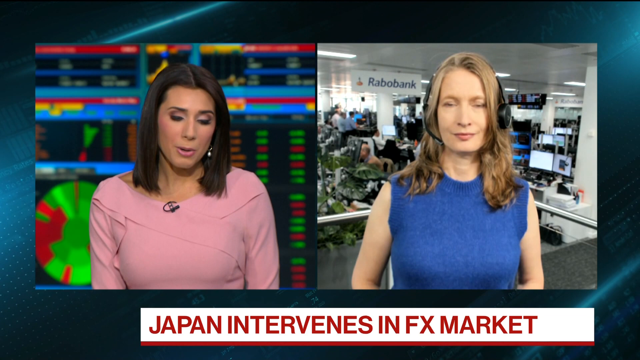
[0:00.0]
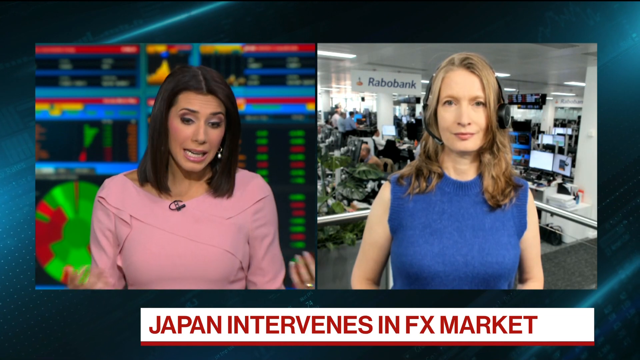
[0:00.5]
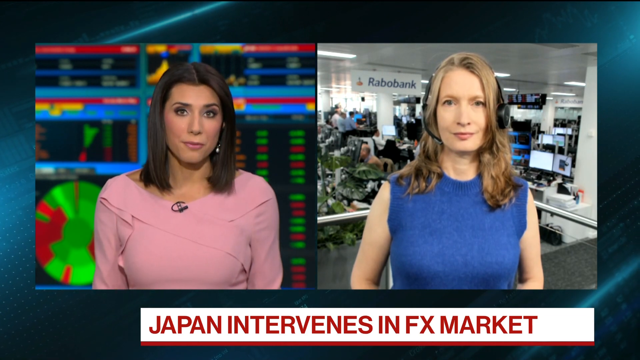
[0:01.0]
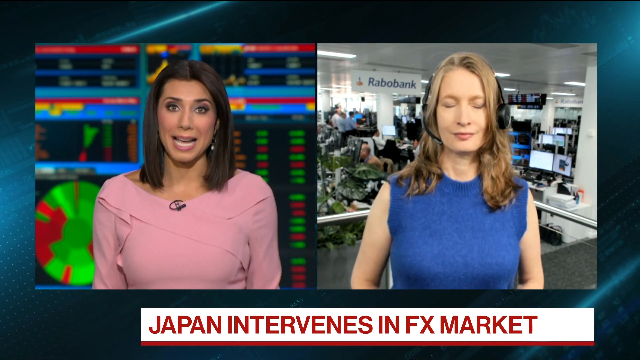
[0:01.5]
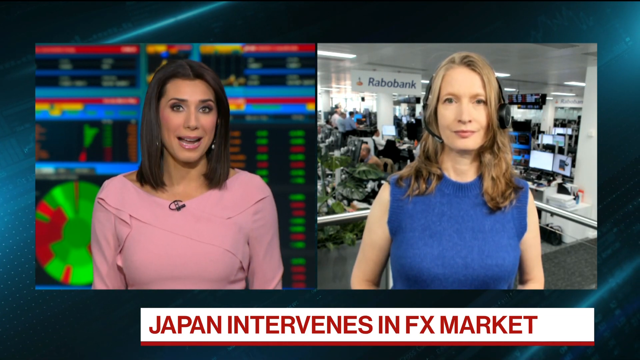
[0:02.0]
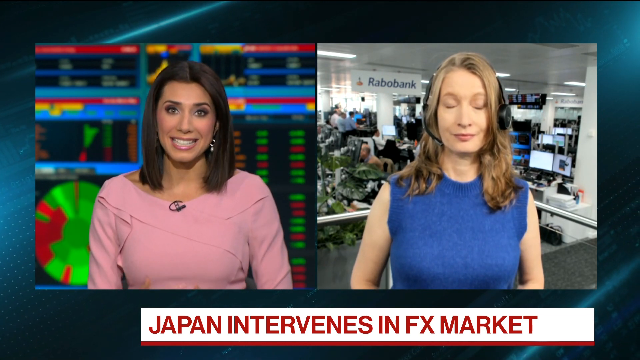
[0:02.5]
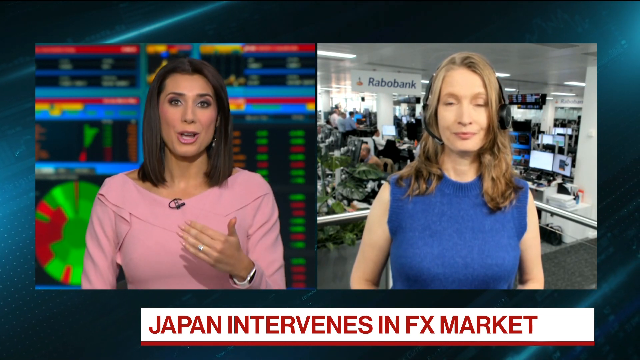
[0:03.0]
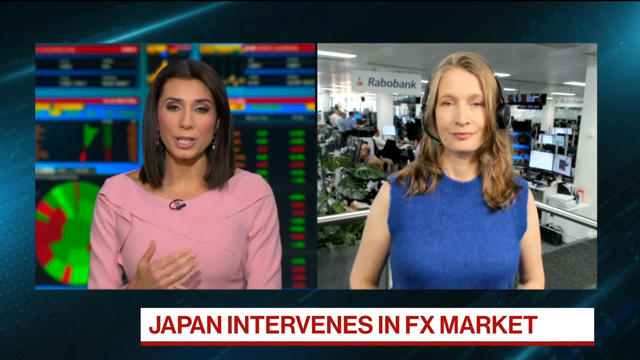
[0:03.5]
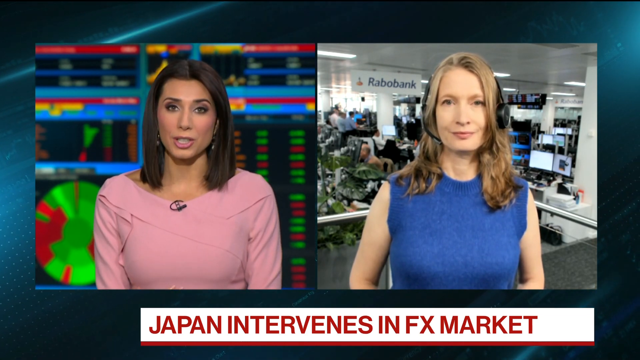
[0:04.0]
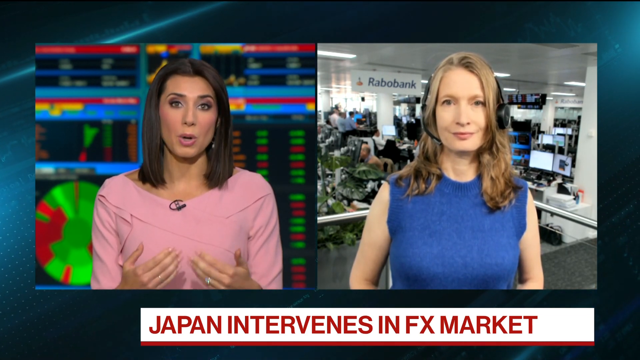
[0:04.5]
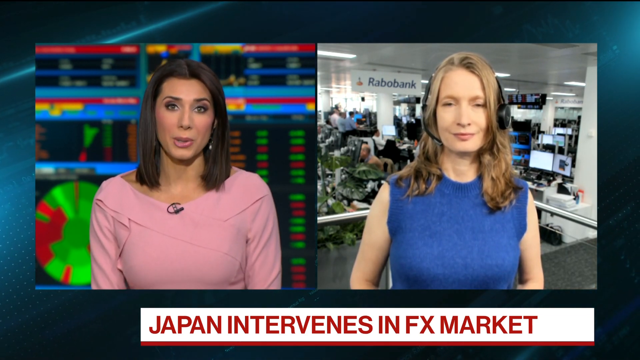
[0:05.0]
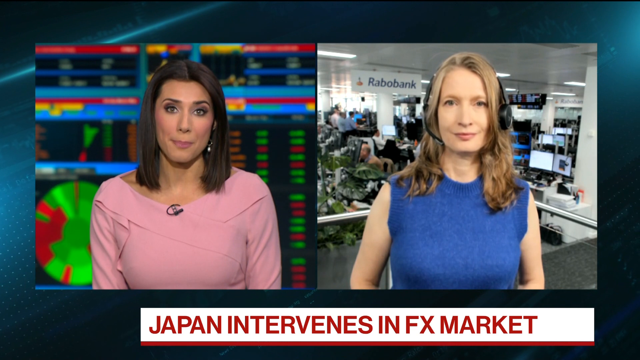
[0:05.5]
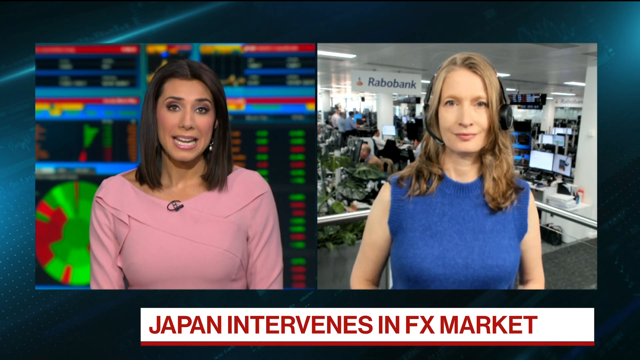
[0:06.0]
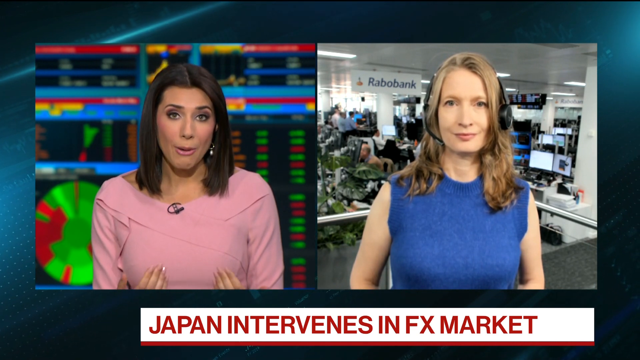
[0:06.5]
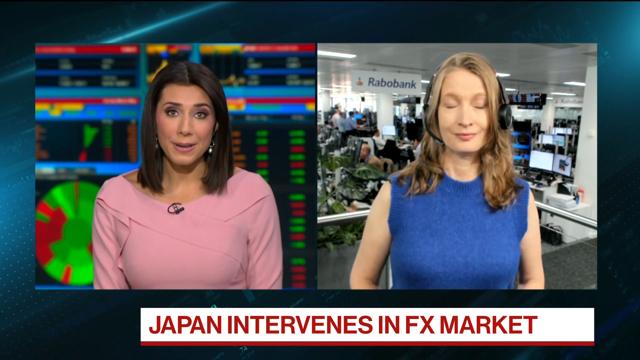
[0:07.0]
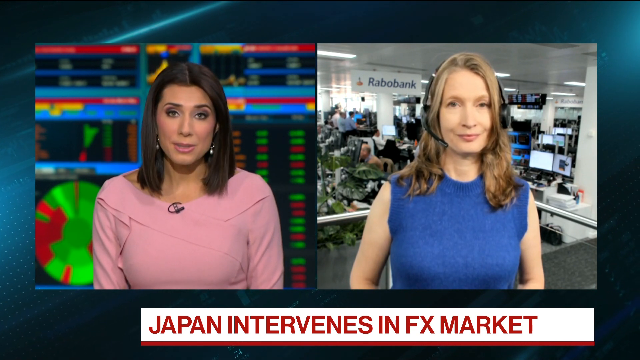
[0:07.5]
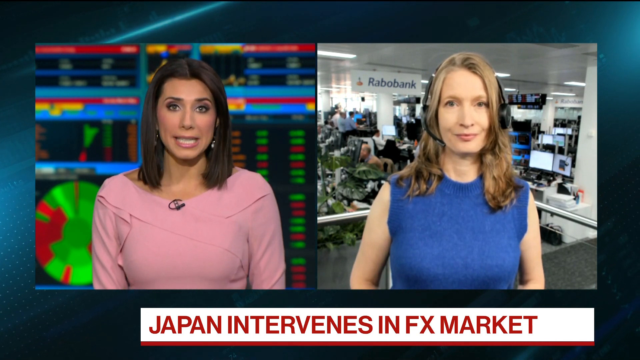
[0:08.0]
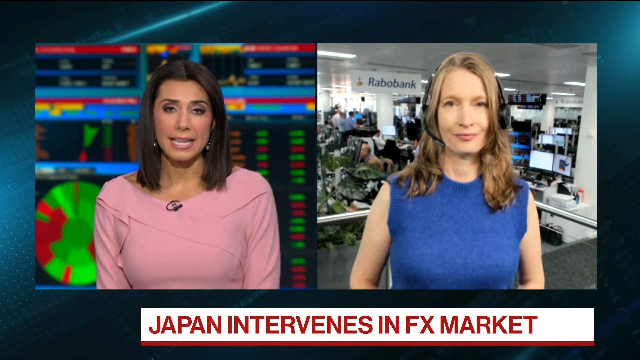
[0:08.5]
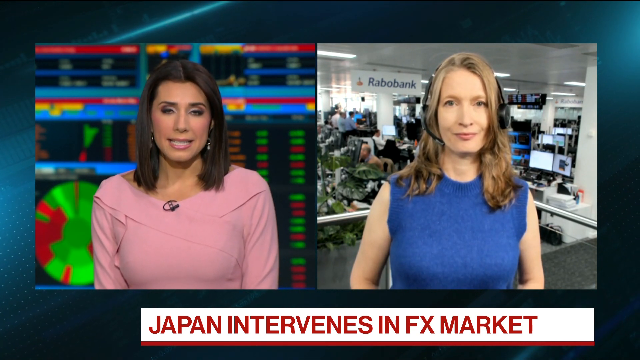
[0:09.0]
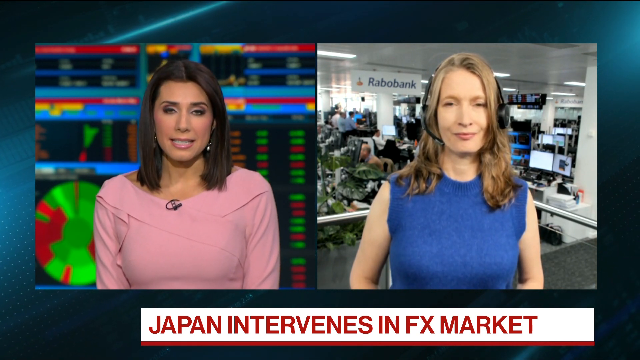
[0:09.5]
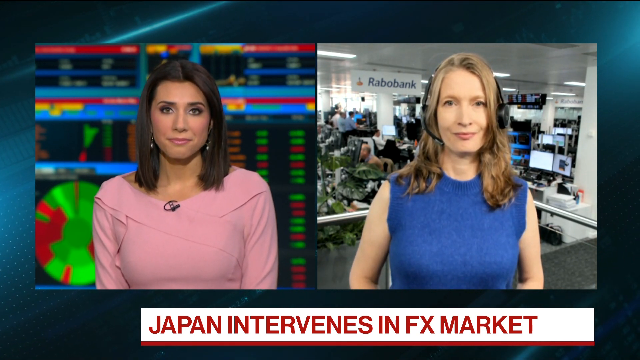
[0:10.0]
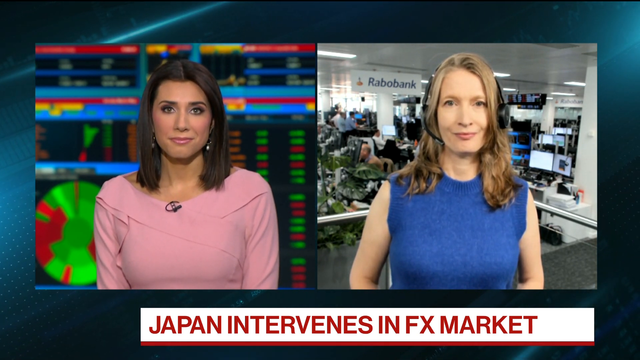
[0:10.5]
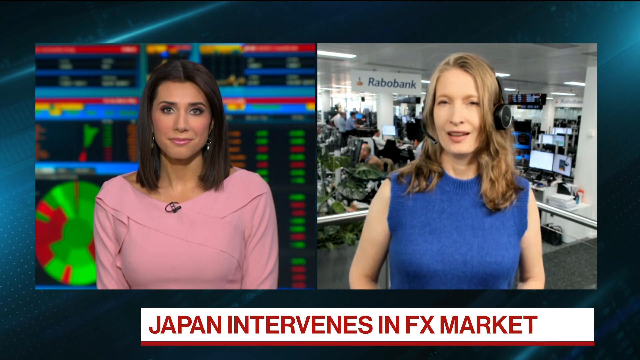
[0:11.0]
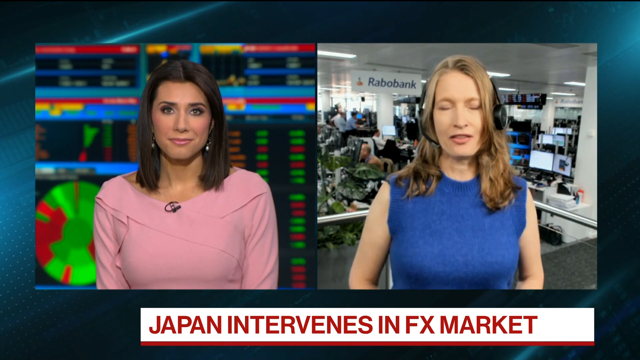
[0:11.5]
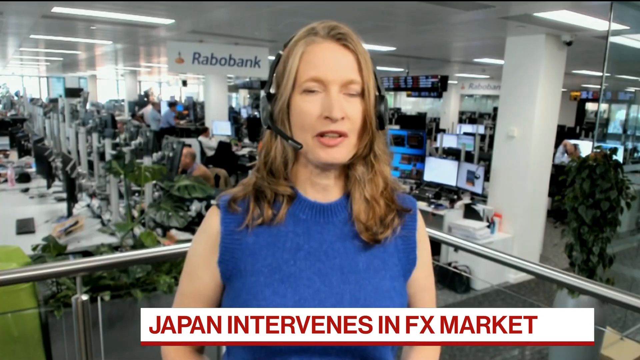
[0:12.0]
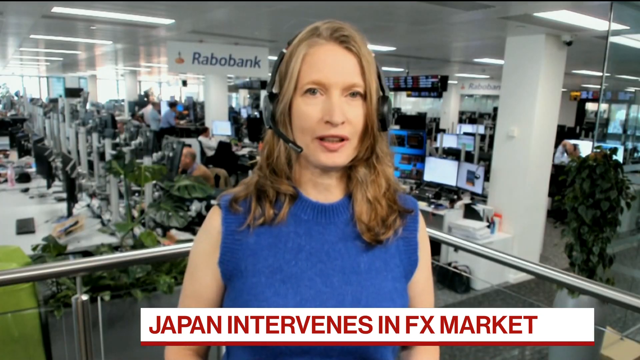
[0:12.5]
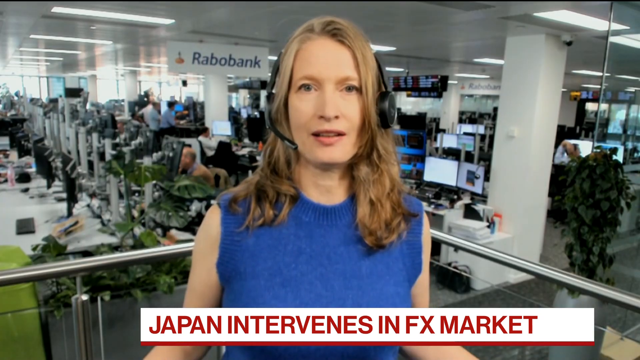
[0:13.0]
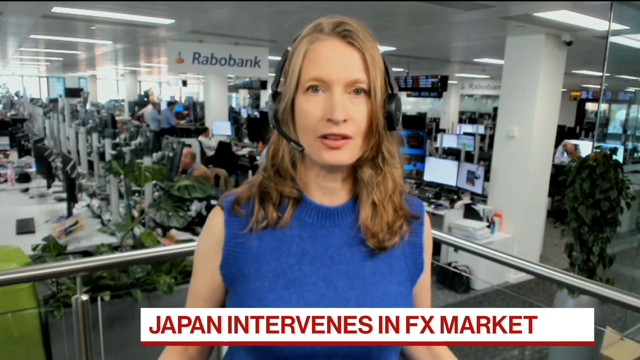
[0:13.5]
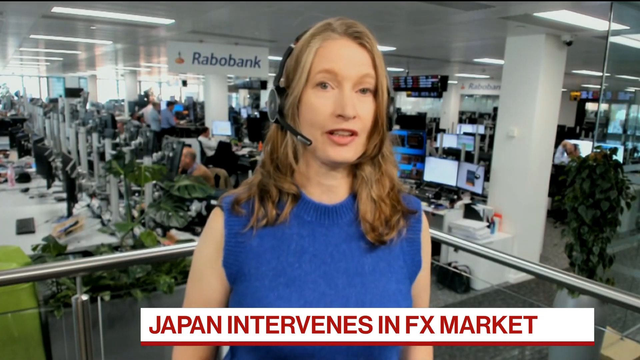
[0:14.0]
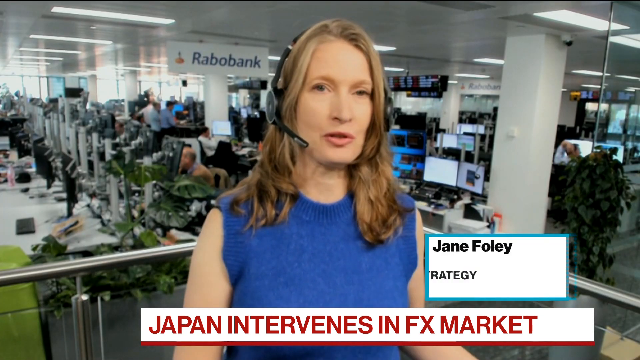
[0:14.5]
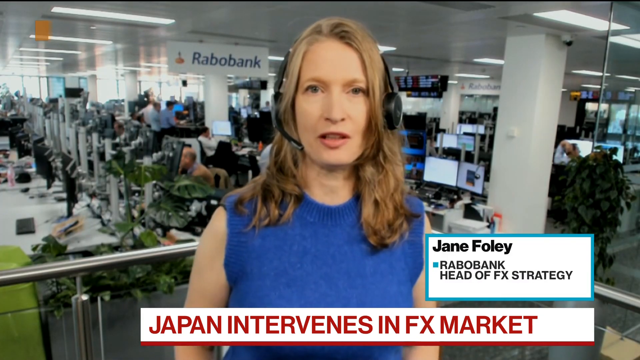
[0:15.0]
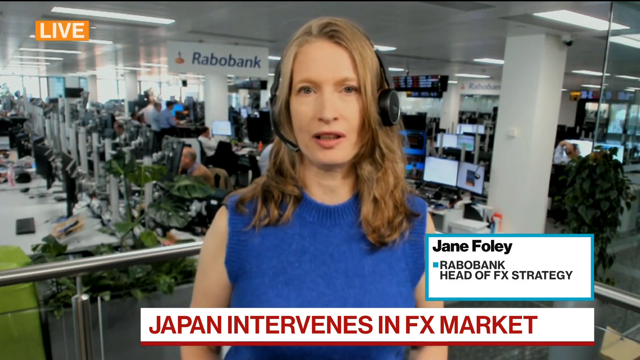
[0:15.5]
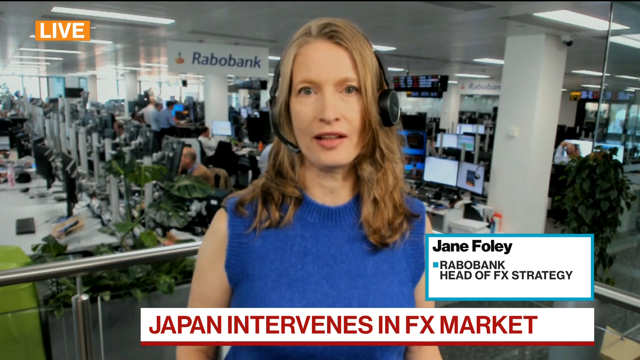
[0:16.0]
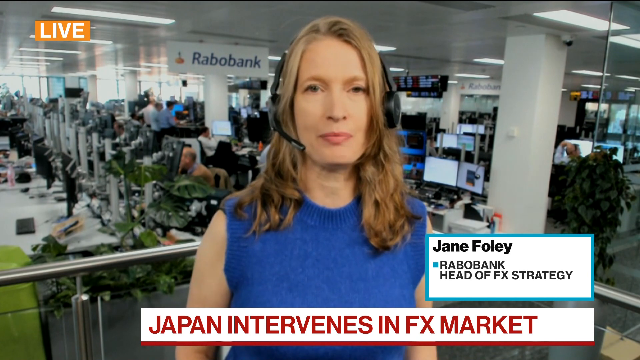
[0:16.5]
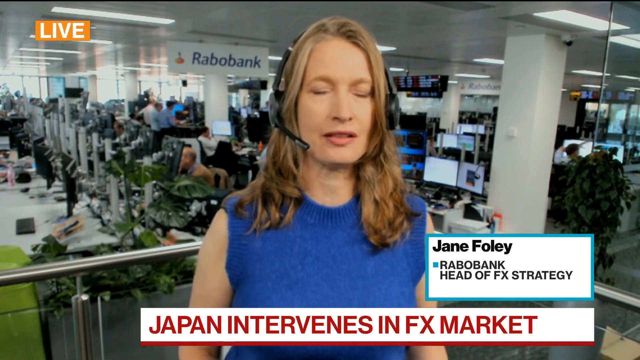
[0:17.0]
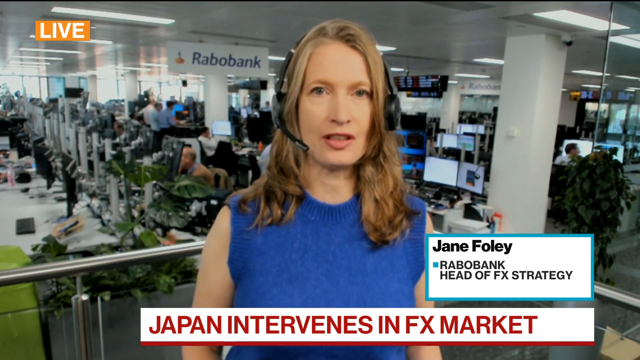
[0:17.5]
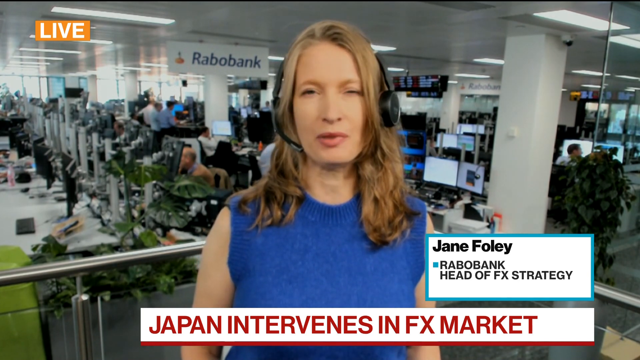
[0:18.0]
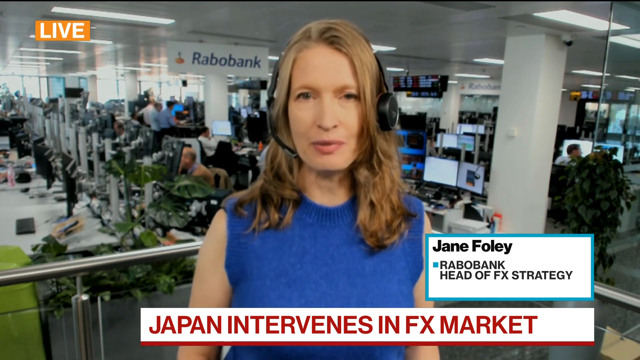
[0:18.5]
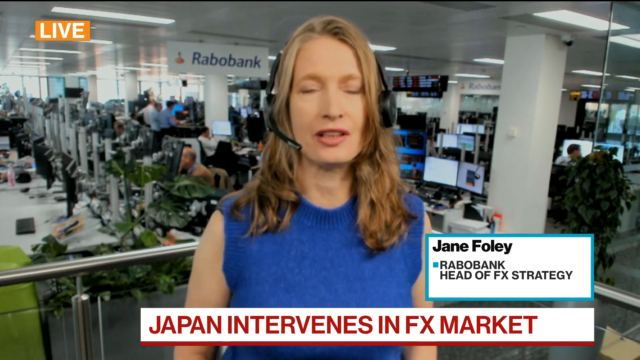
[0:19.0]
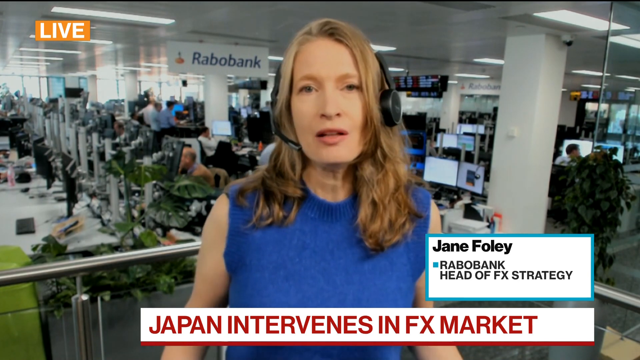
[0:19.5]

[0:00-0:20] The video appears to be a news story. The screen starts out with two boxes: a female newscaster on the left side and, on the right side, what looks to be a reporter in a box at a different location. At the bottom of the screen is what looks to be a news ticker reading "Japan intervenes in FX market". The newscaster on the left looks to be in her late 20s or early 30s, and in the background behind her there are charts and possibly stock tickers. She begins to speak, gesticulating quite animatedly. The person on the right then starts to speak; she is likely in her late 30s or early 40s, has a headset on, and looks to be in a newsroom. The screen zooms in to show just her, she talks for a moment, and then it zooms back out to show both of them.